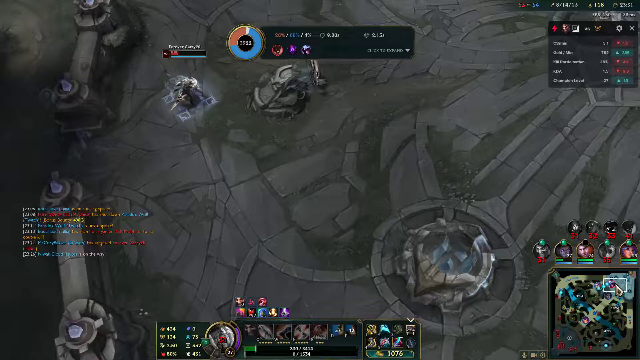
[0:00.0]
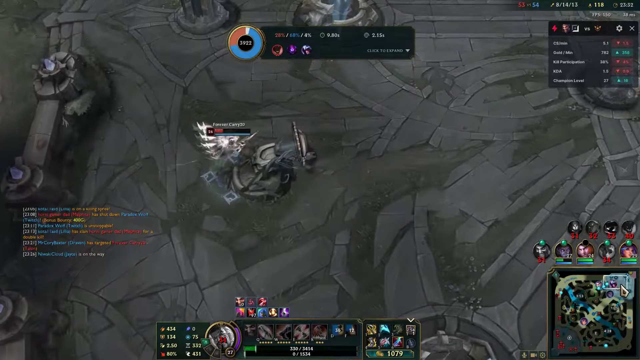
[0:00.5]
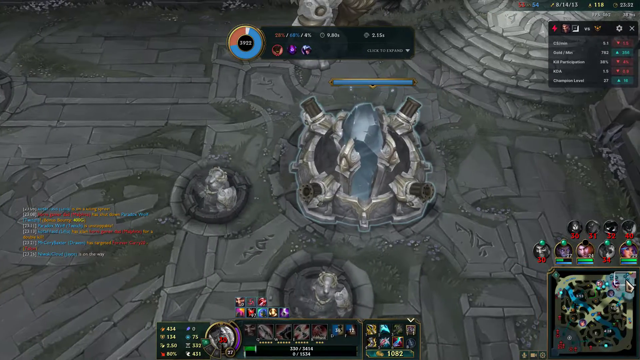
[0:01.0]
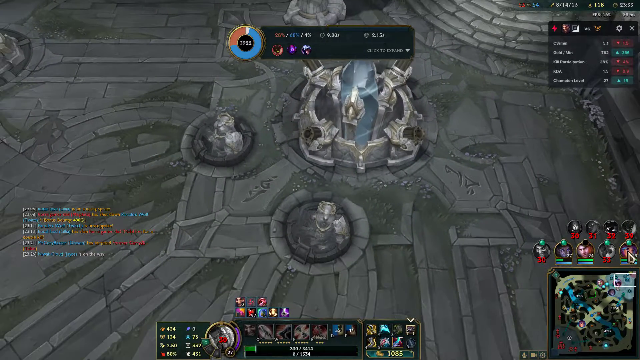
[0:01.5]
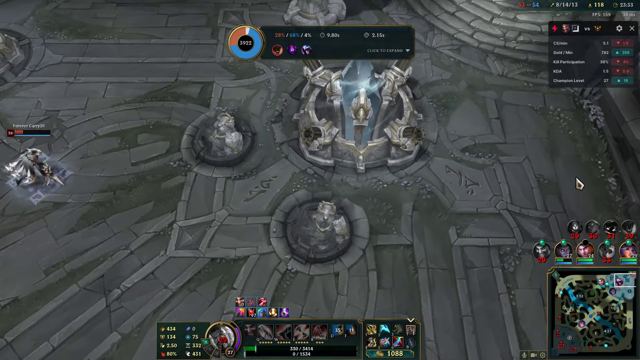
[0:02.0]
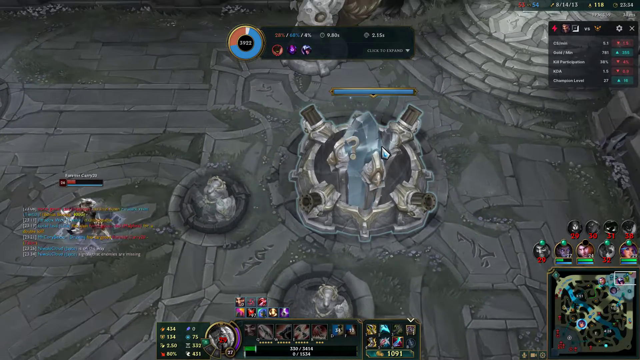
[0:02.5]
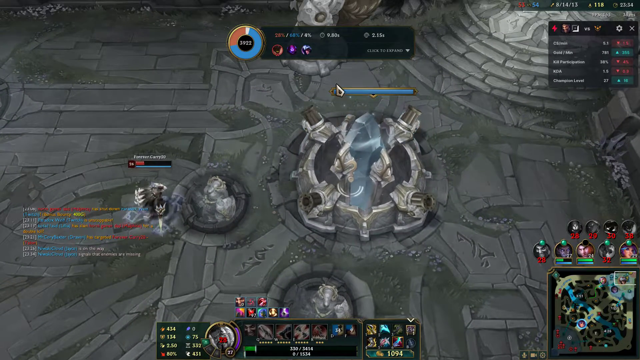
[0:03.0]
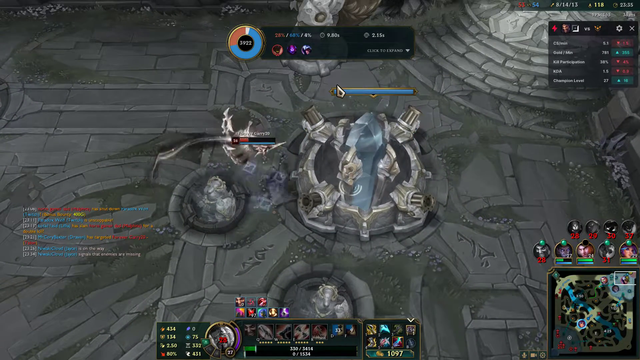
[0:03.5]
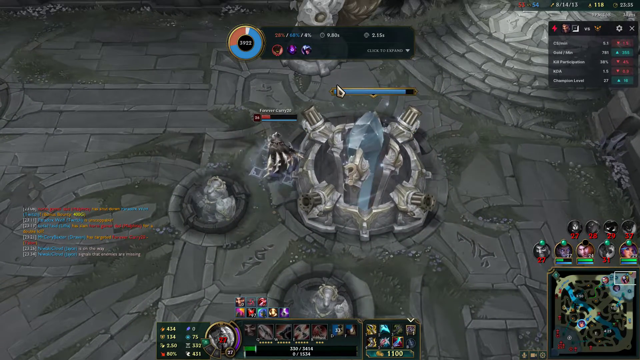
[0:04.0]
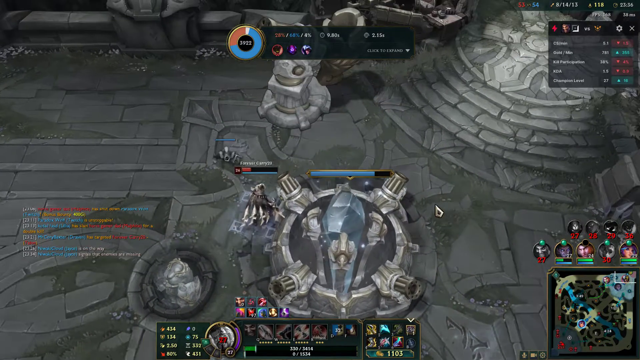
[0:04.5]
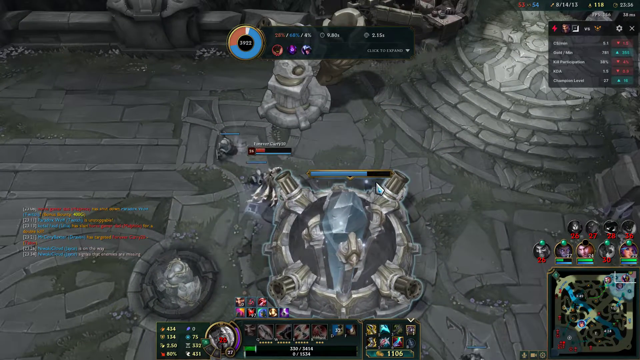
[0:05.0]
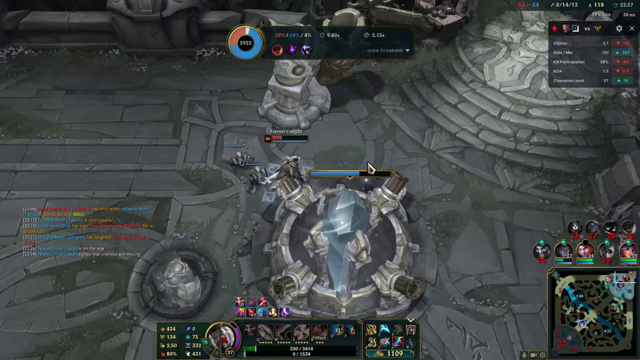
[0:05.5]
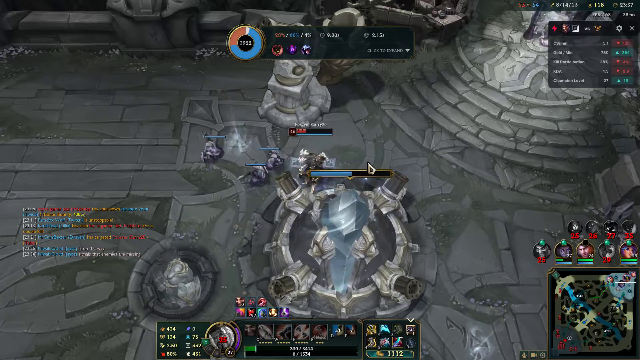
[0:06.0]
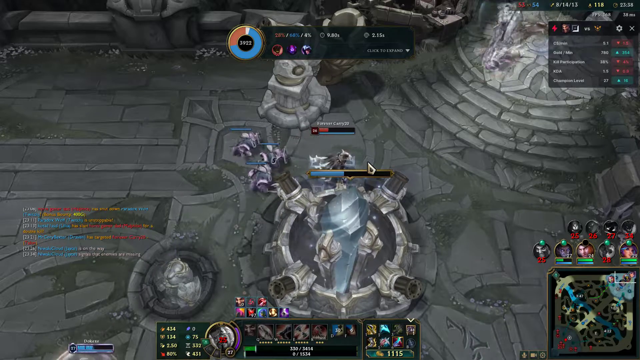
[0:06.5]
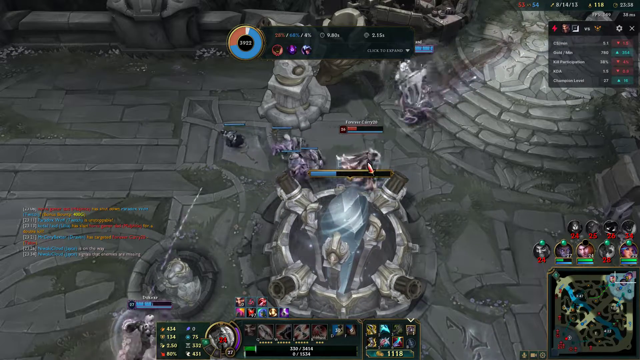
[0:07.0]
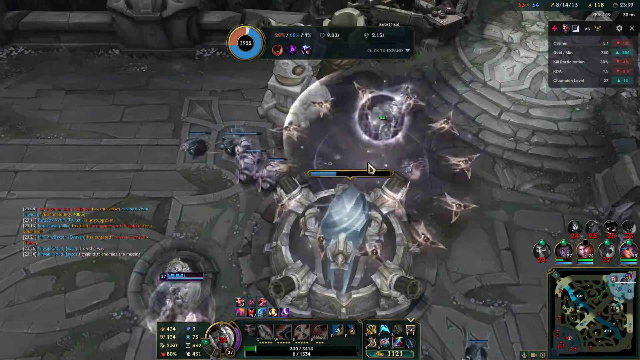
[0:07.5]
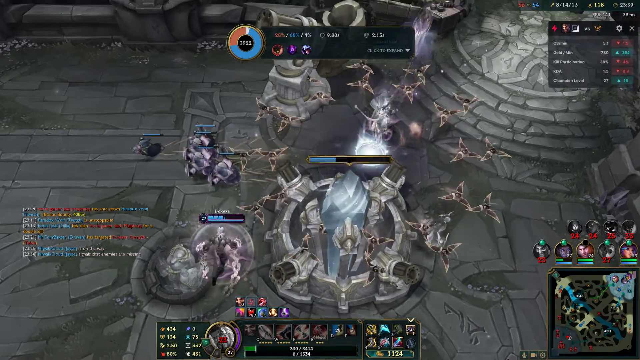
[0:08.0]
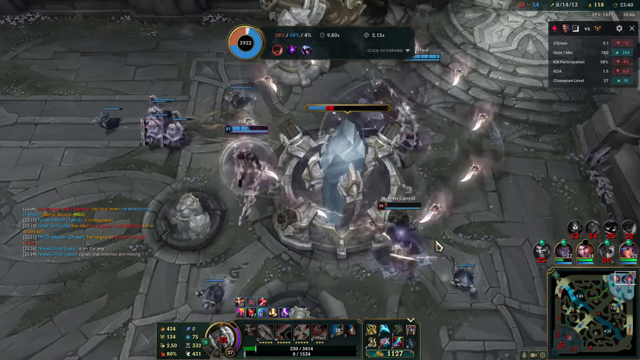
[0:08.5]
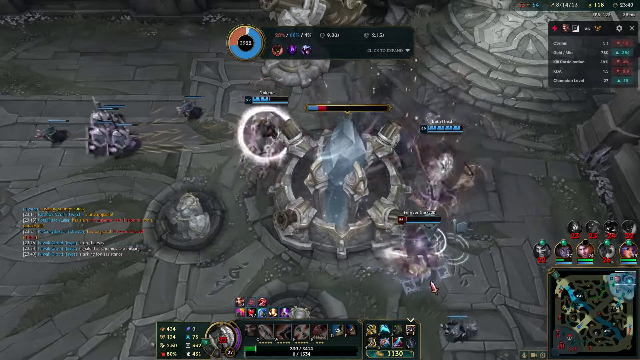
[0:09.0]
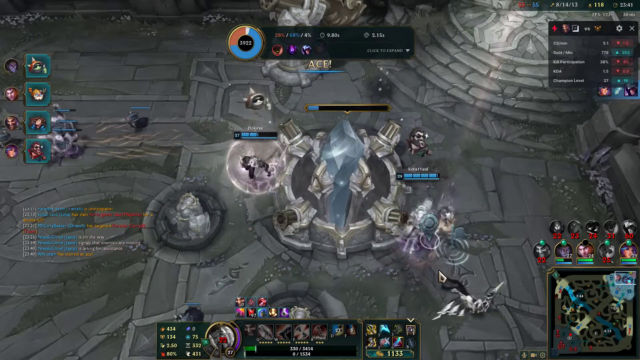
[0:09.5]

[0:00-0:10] Gameplay from a game that is mostly grey, kind of black and white. There are two characters, or maybe one character, with a little red health bar that is kind of low. Settings appear on the screen: in the top right there seem to be some game metrics, at the bottom right there is a mini-map along with some characters, in the center at the bottom there are game settings, and a little chat section is at the center of the left of the screen. A character runs around in the game and beats some of the other opponents, and their health depletes. Other characters run around, with a lot of movement and circular motions.